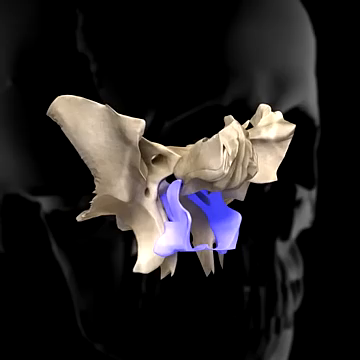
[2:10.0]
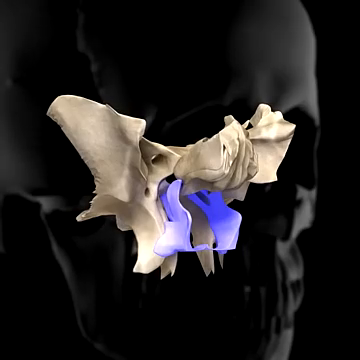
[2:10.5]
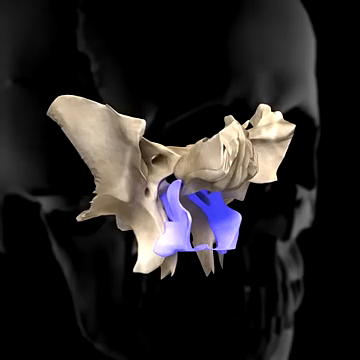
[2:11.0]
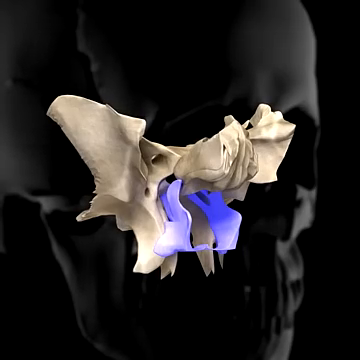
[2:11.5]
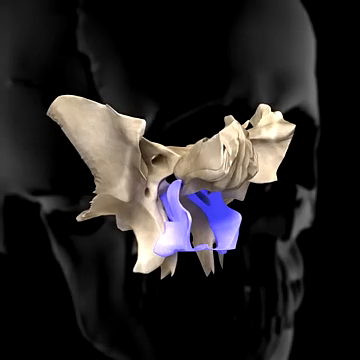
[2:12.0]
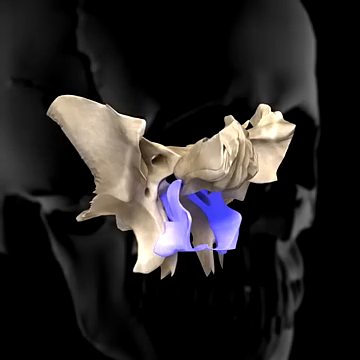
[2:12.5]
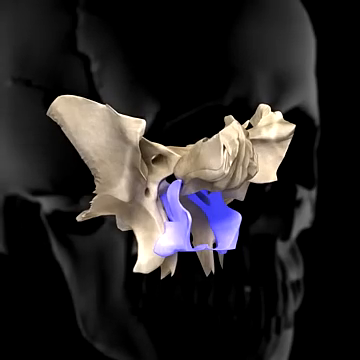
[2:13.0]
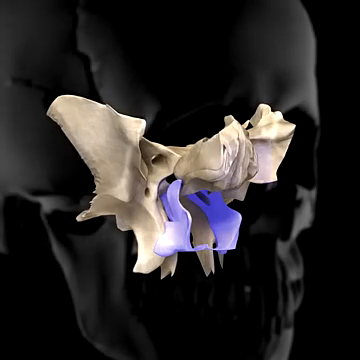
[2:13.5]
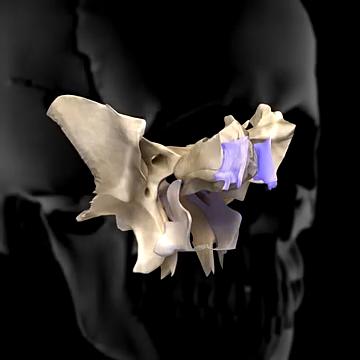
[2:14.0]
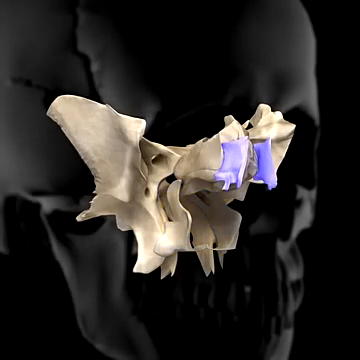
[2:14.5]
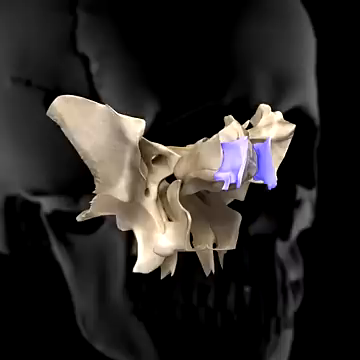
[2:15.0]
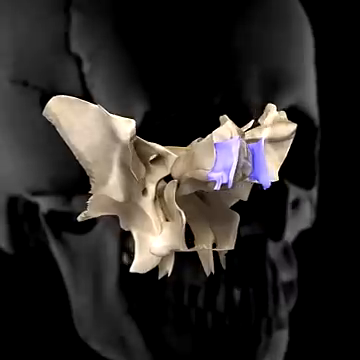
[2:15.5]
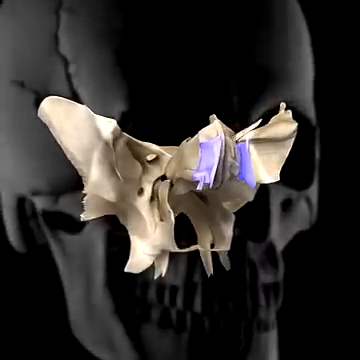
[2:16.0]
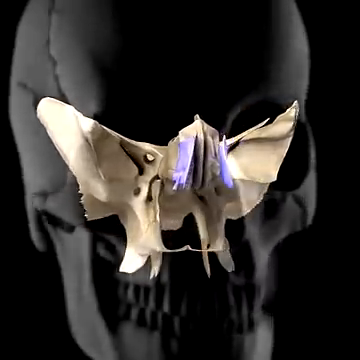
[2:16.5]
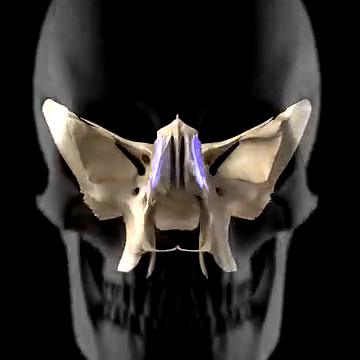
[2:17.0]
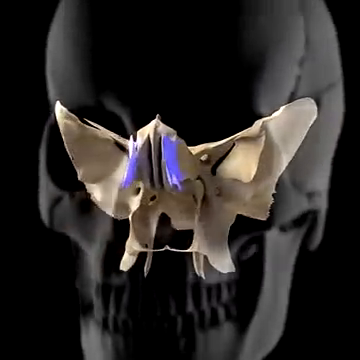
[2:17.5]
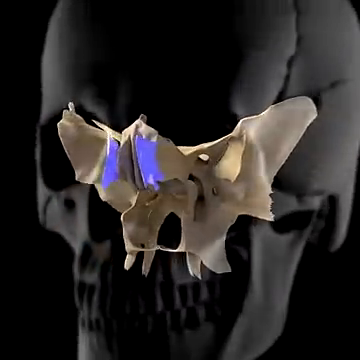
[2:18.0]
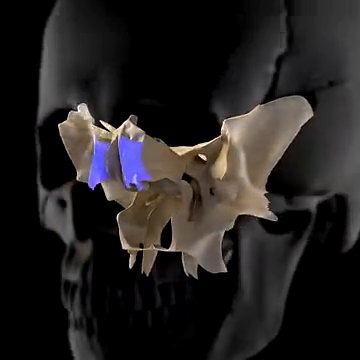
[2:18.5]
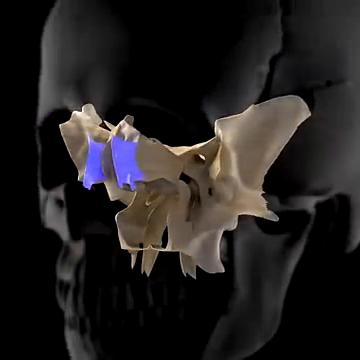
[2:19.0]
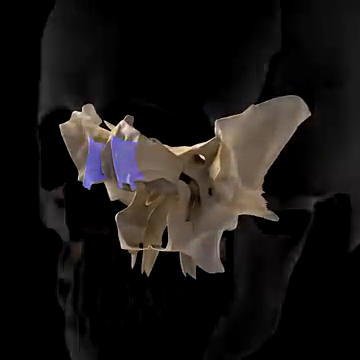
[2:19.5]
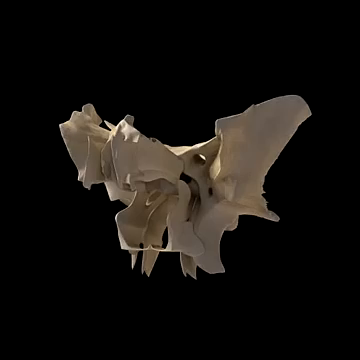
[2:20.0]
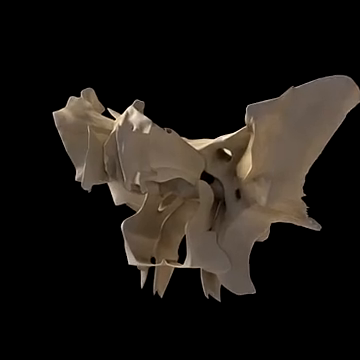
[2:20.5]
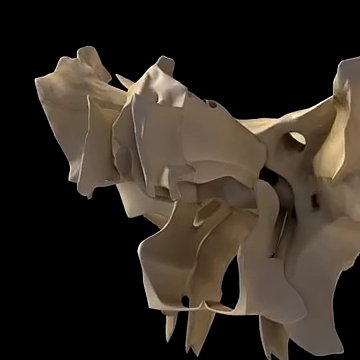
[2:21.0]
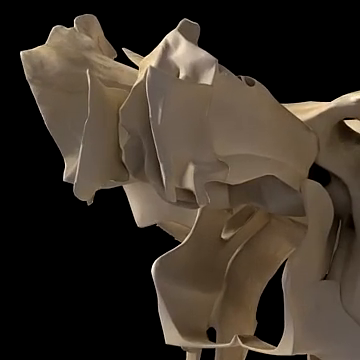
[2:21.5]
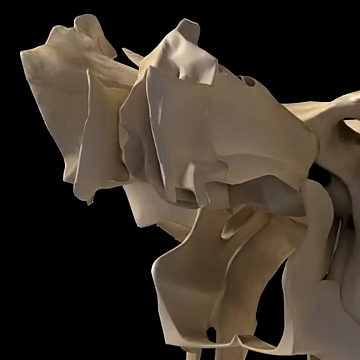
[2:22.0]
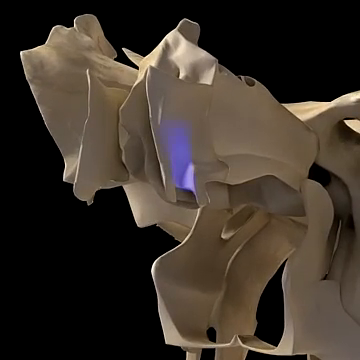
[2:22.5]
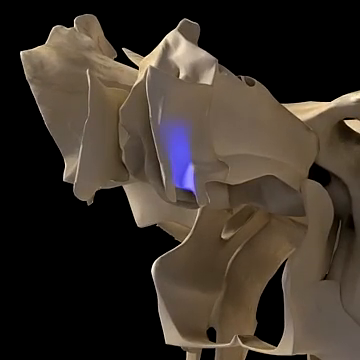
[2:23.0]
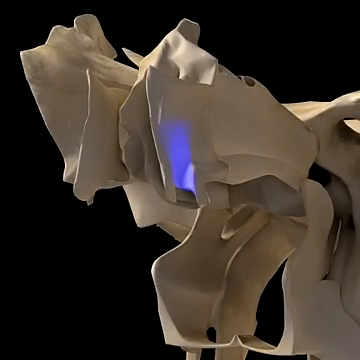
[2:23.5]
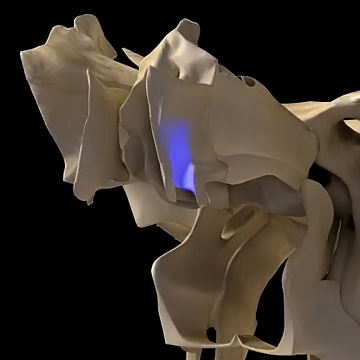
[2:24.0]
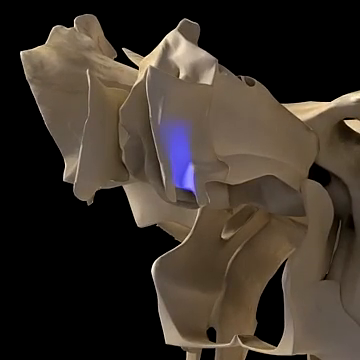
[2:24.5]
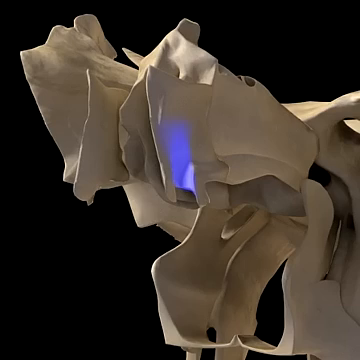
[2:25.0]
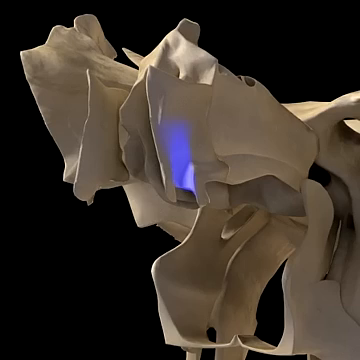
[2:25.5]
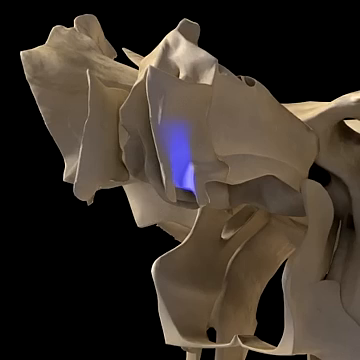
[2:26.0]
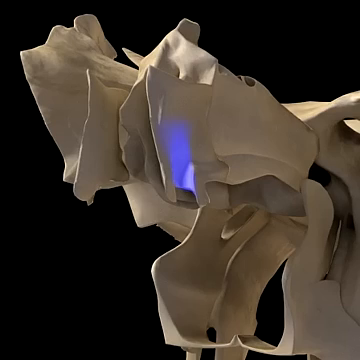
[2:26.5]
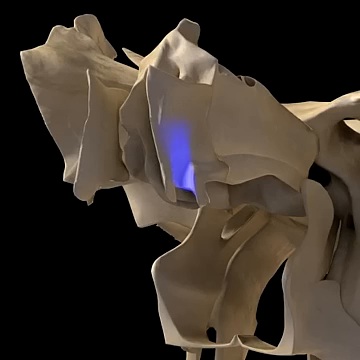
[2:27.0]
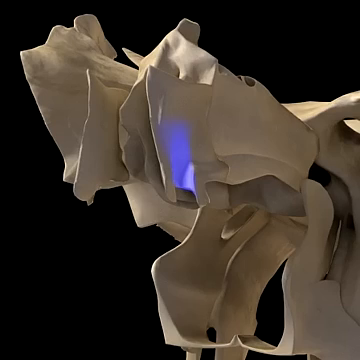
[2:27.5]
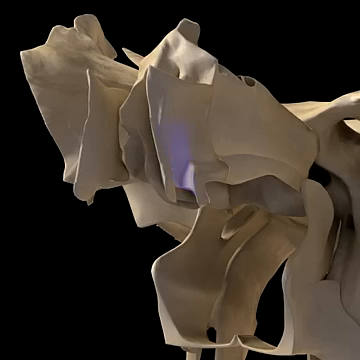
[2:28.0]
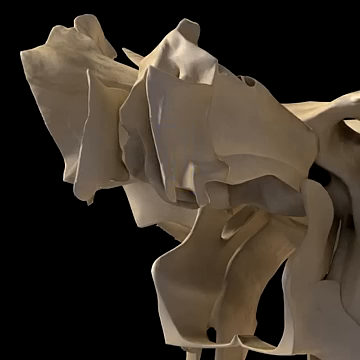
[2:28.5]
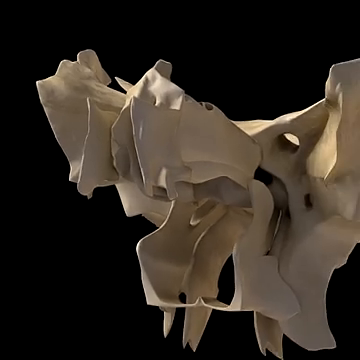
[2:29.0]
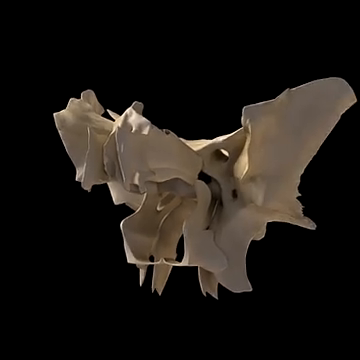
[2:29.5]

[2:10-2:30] Against a black background, a dark gray skull covers the whole frame as the background, with the white butterfly bone in front of it. The skull and bone are in profile facing the viewer's right and somewhat forward, not a complete side view. Two pieces at the center front bottom of the butterfly bone are highlighted in purple, and then two more top pieces of the bone are highlighted in purple. The skull continues rotating from the viewer's right to the left and stops facing the left front, not quite a side view. The skull background disappears and the camera zooms in very closely on the center right of the butterfly bone; the highlight has disappeared. A small highlight appears on the middle of the bone, and then the camera zooms out quickly.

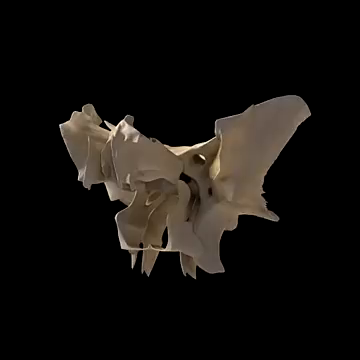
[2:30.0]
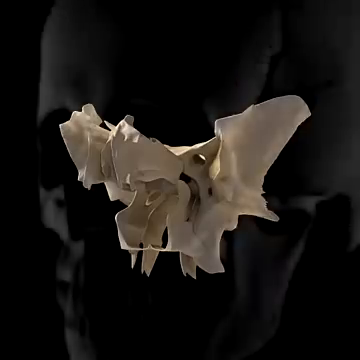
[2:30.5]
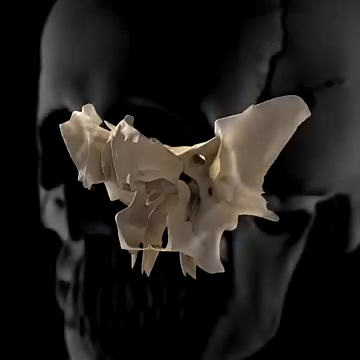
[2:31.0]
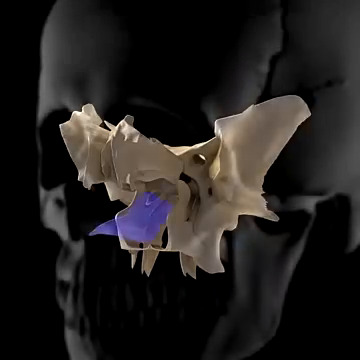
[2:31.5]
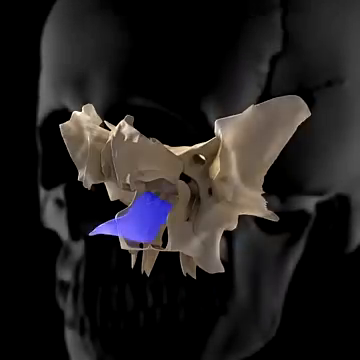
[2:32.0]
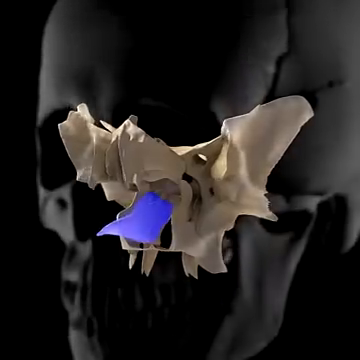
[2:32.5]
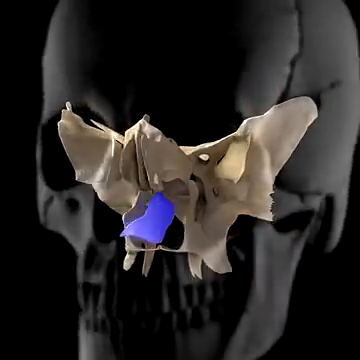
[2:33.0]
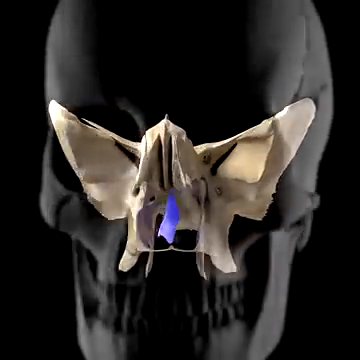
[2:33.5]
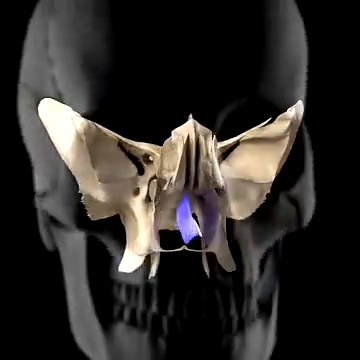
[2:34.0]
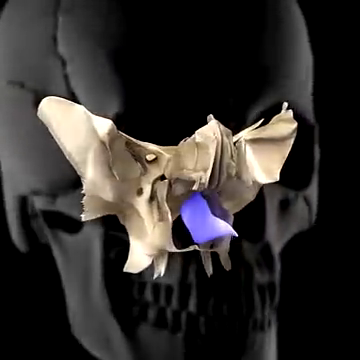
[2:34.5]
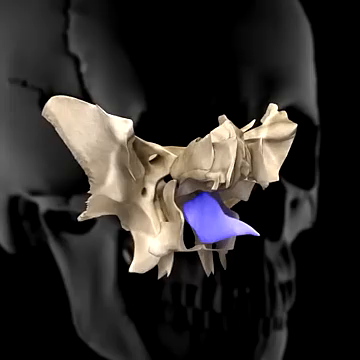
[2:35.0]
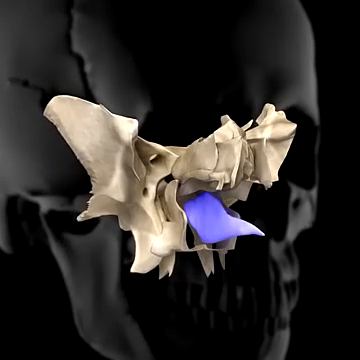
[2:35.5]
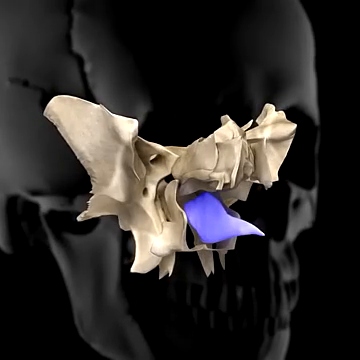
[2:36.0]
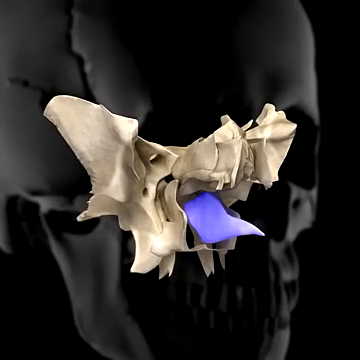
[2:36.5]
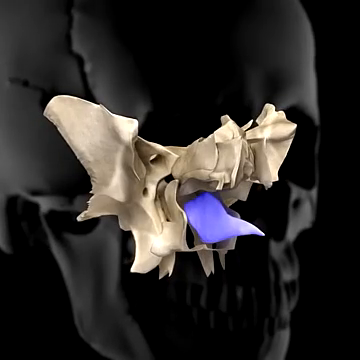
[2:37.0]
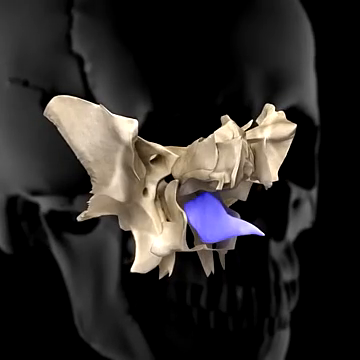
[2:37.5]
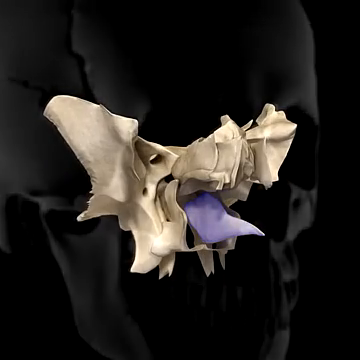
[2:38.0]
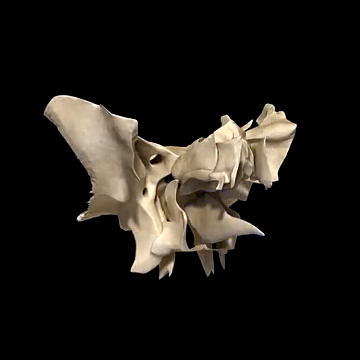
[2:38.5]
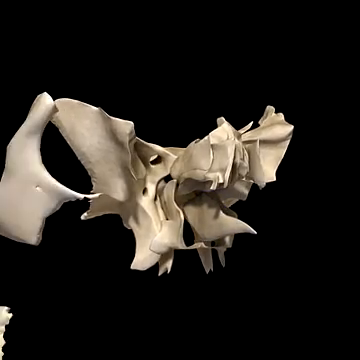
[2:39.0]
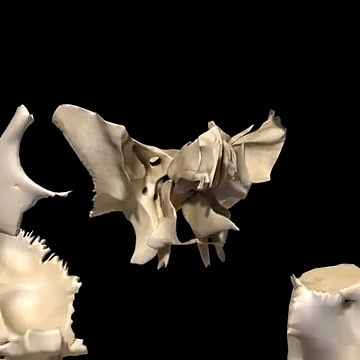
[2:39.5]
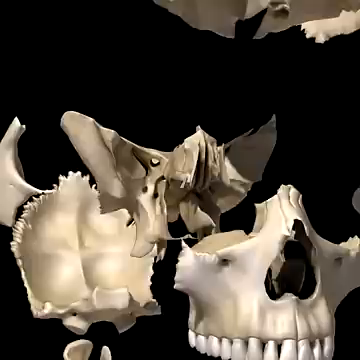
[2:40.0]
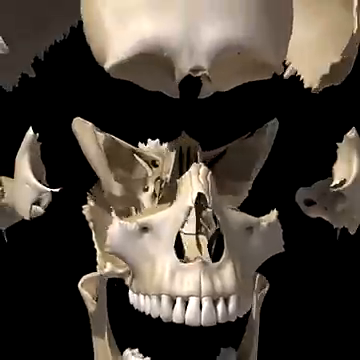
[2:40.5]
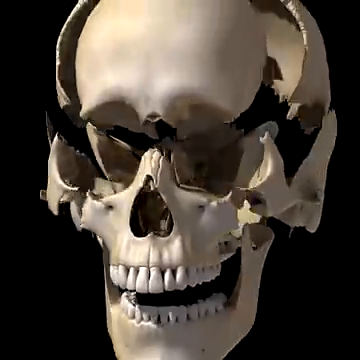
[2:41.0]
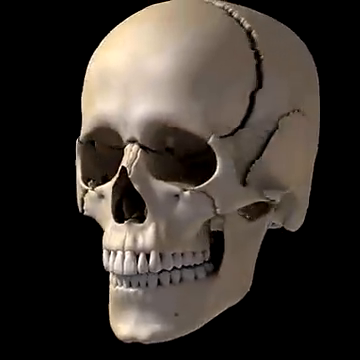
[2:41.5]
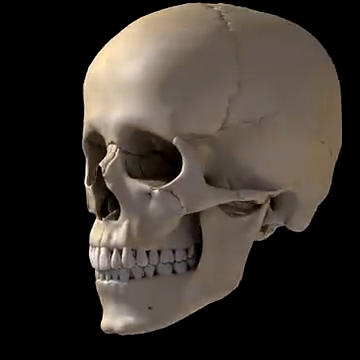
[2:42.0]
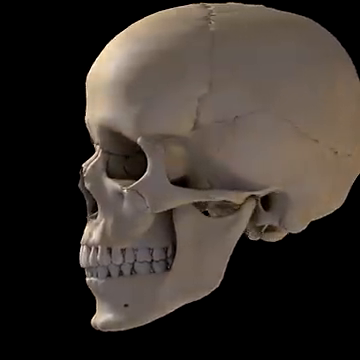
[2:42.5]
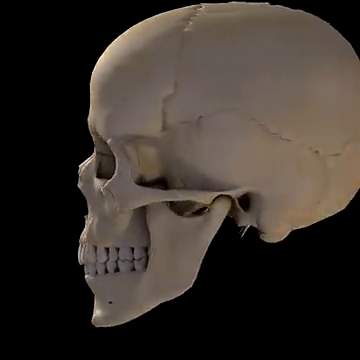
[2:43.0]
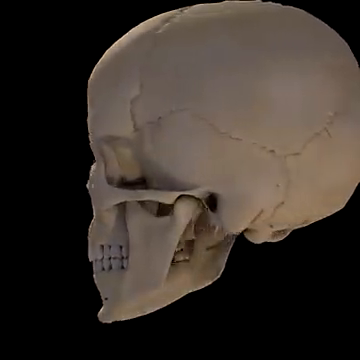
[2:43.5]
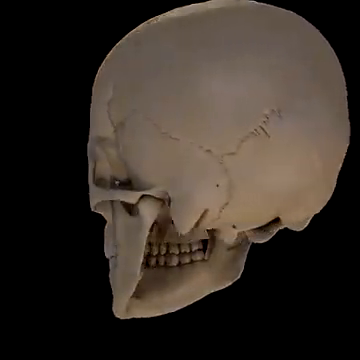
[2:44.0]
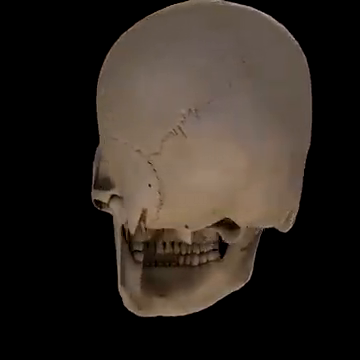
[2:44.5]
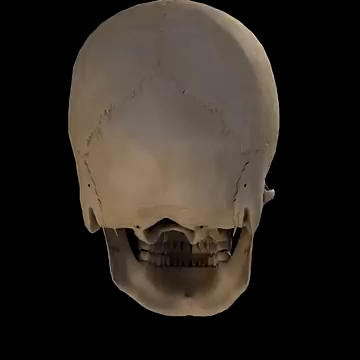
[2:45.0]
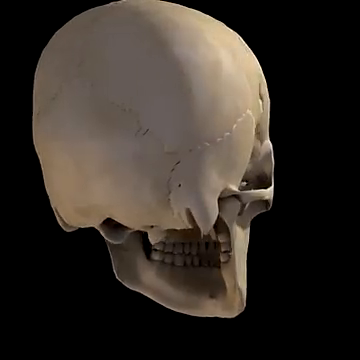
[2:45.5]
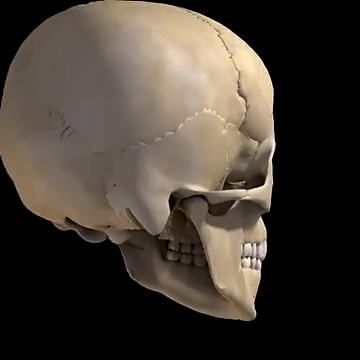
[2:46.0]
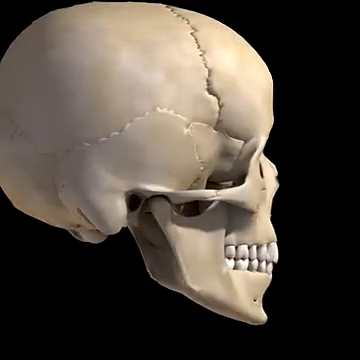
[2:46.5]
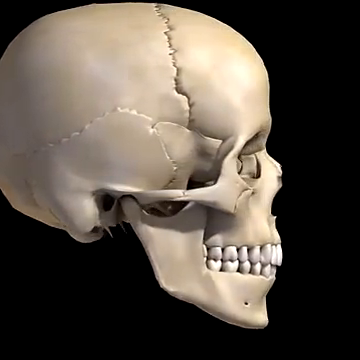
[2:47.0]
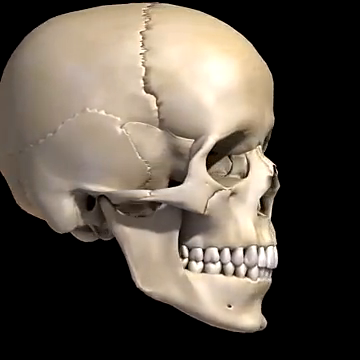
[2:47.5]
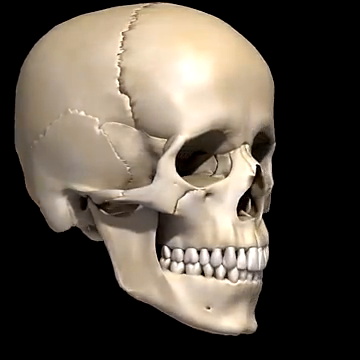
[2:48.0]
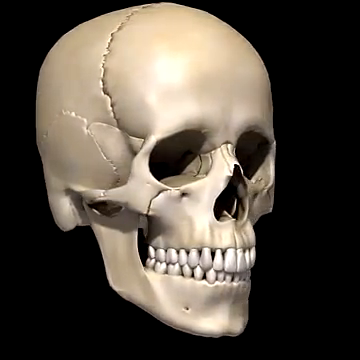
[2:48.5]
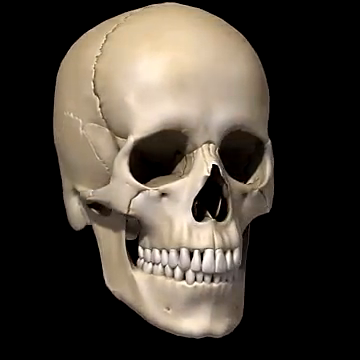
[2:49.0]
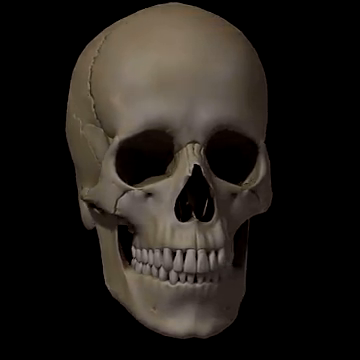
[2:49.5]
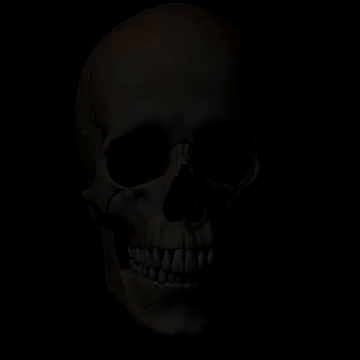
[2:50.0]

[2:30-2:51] Against a black background is the center piece of the skull, the butterfly bone, separate from the rest of the skull: a white piece of bone filling the center of the screen. The skull then appears behind the butterfly bone, with a black background behind the skull, and a simple purple highlight appears on the bottom front of the butterfly bone. The bone and skull face toward the viewer's left front, almost a side view. They then rotate to the viewer's right, with the bottom of the butterfly bone still highlighted in purple, and stop when they face the viewer's right front. Suddenly the skull in the background disappears, and the butterfly bone begins rotating to the left as all of the pieces of the skull come back together, forming a full skull as it rotates 360 degrees and ends up facing the viewer. The skull fades away and the screen is black.